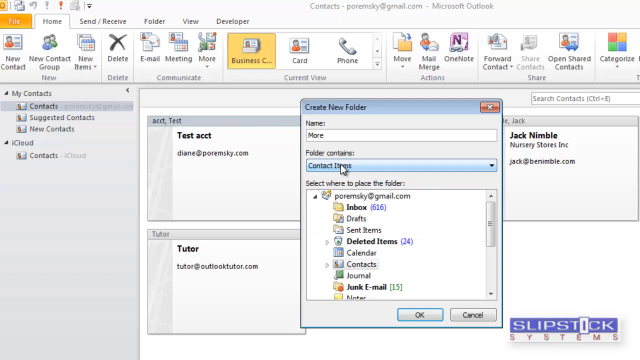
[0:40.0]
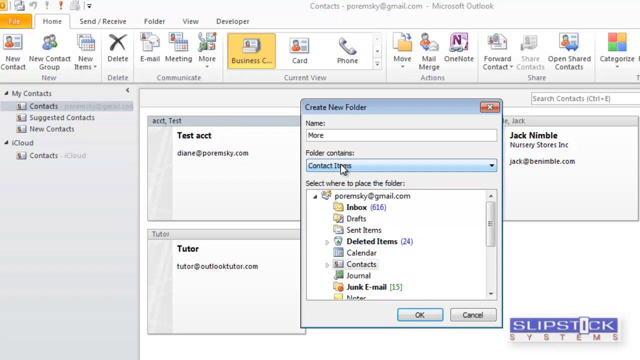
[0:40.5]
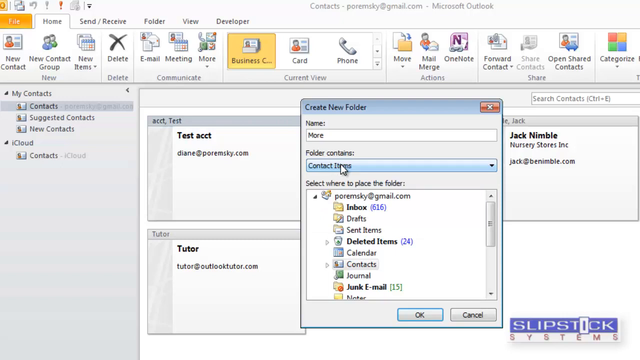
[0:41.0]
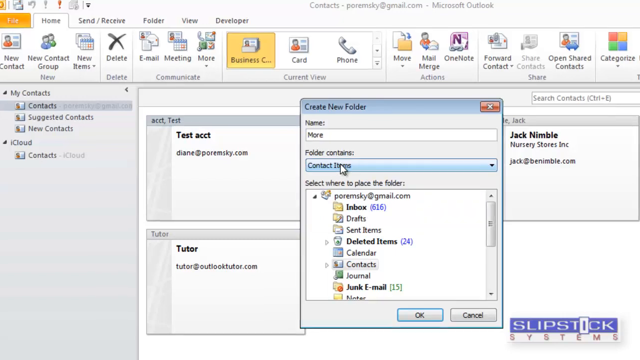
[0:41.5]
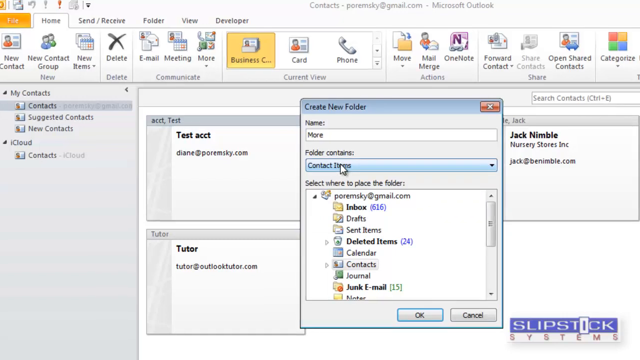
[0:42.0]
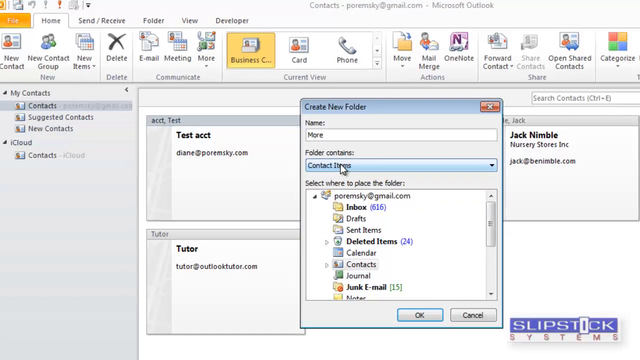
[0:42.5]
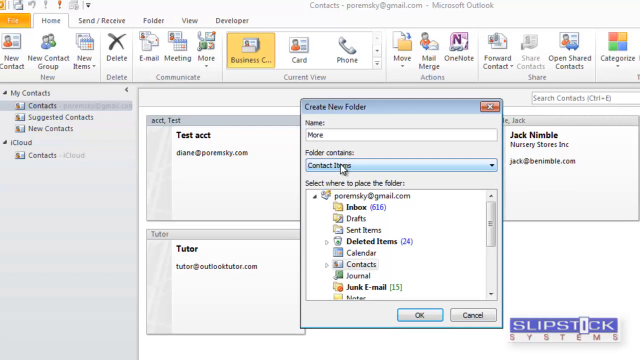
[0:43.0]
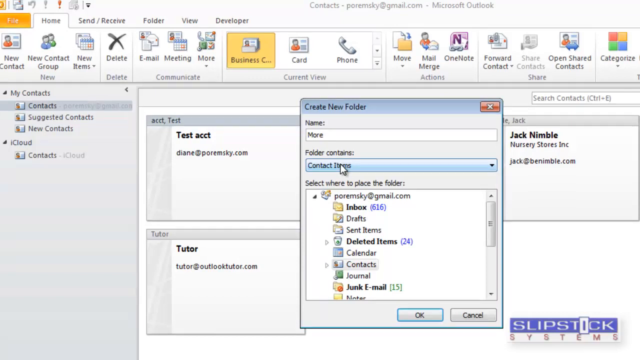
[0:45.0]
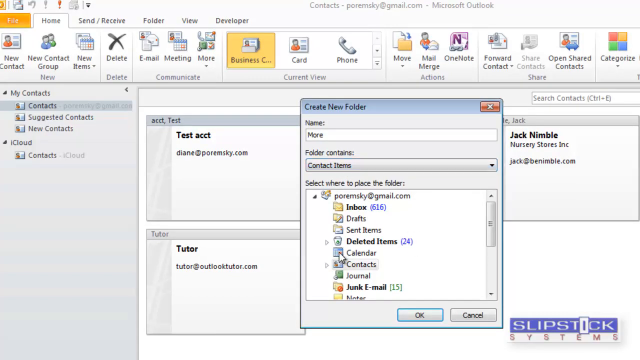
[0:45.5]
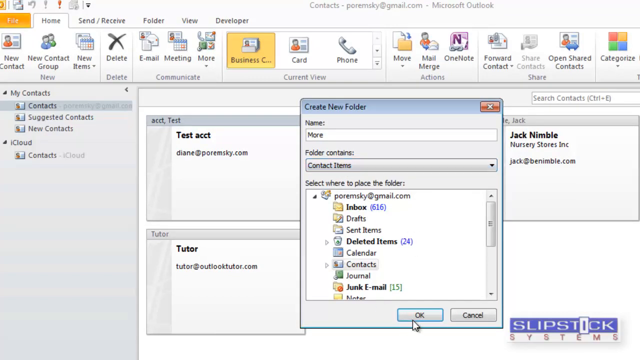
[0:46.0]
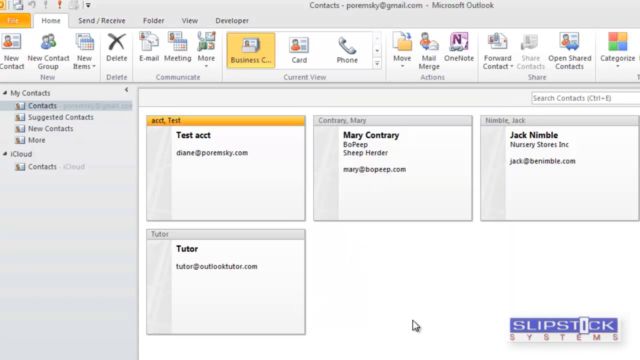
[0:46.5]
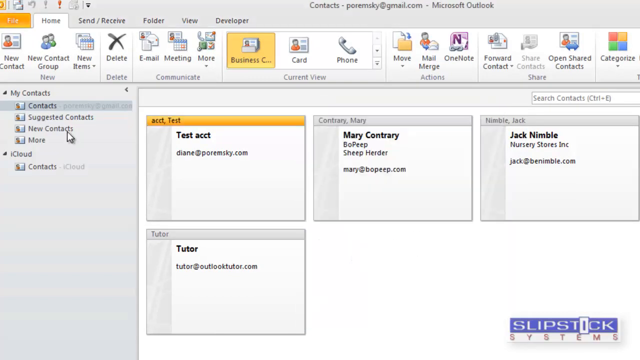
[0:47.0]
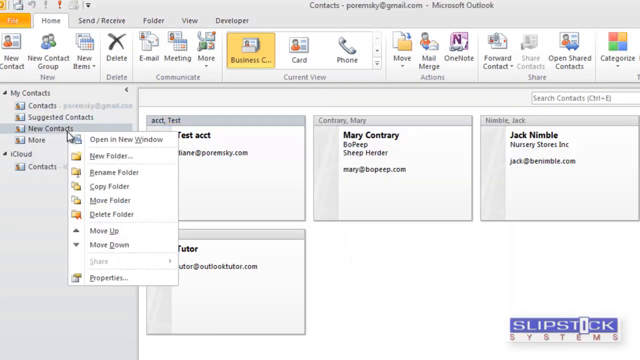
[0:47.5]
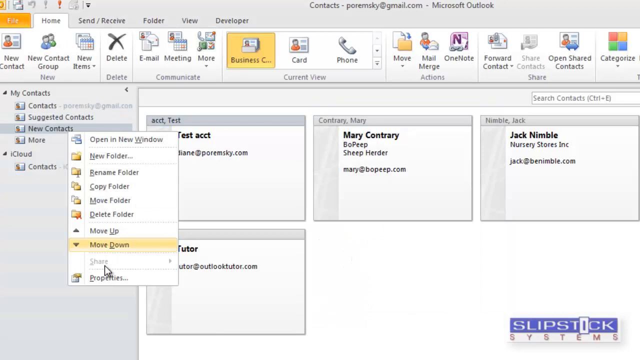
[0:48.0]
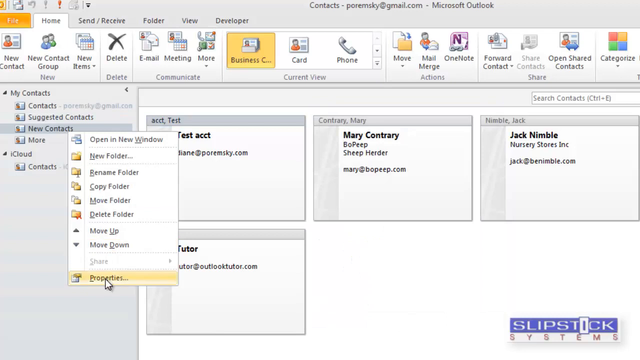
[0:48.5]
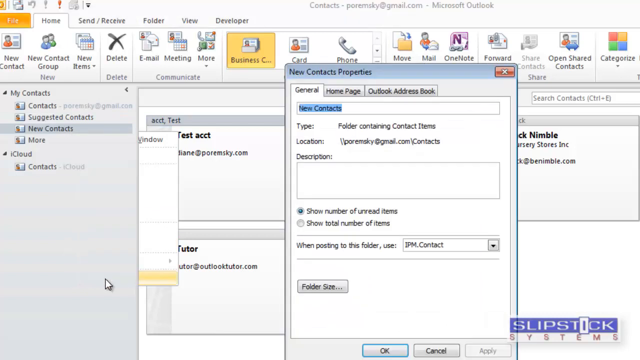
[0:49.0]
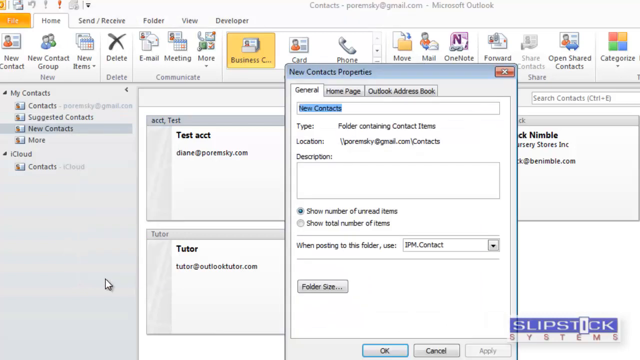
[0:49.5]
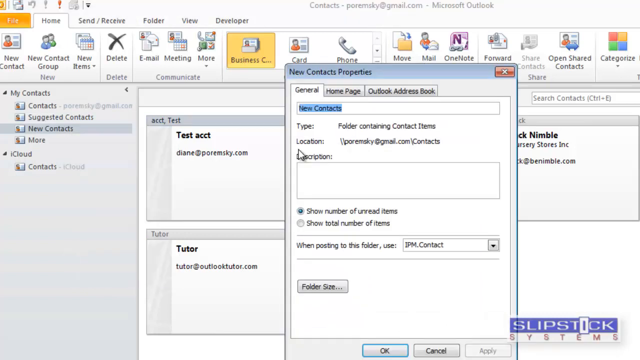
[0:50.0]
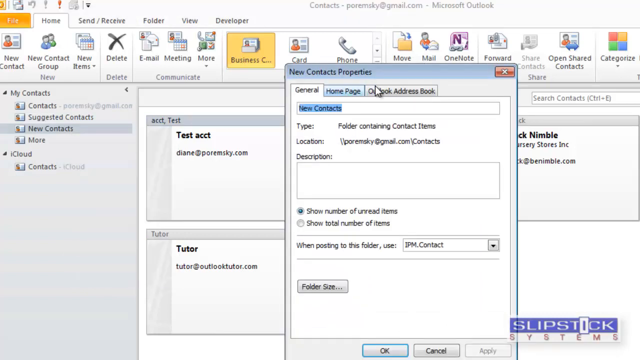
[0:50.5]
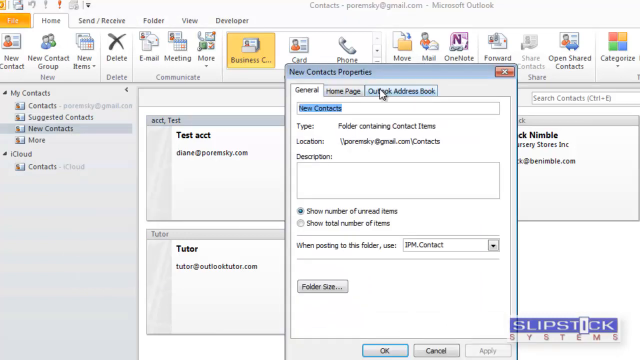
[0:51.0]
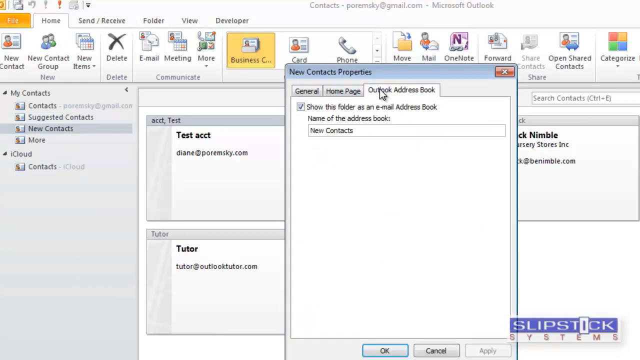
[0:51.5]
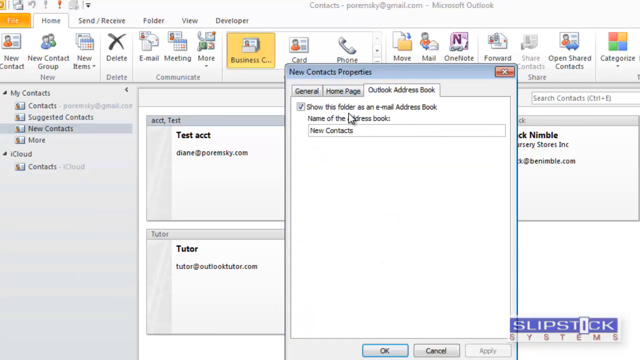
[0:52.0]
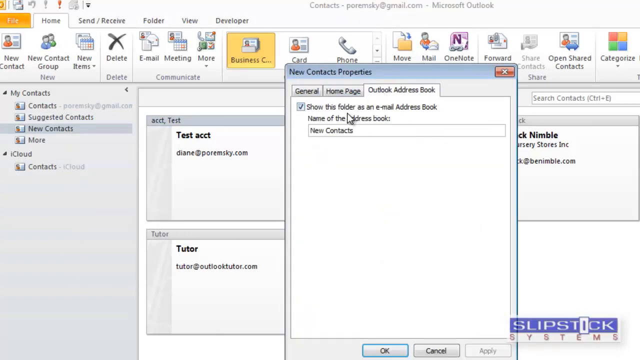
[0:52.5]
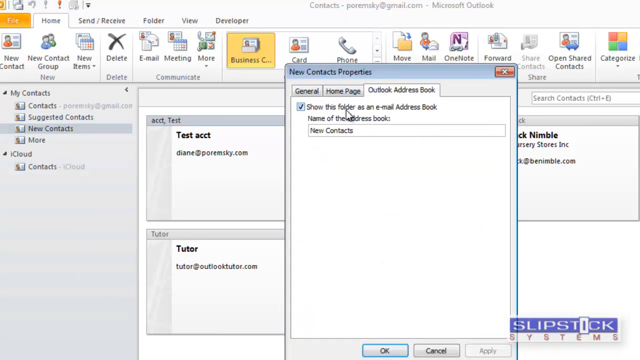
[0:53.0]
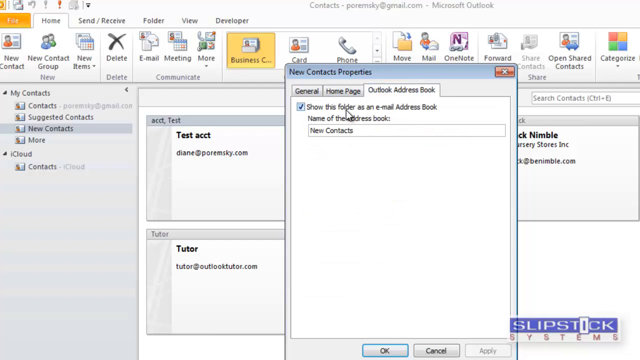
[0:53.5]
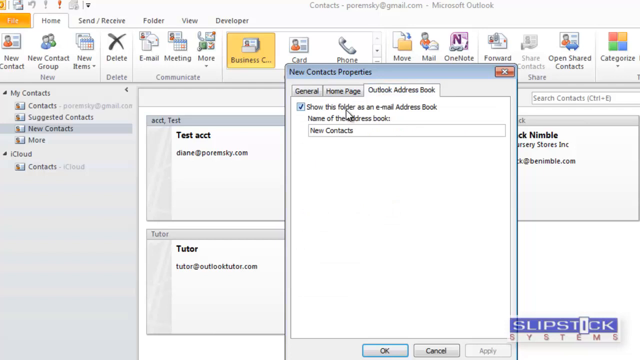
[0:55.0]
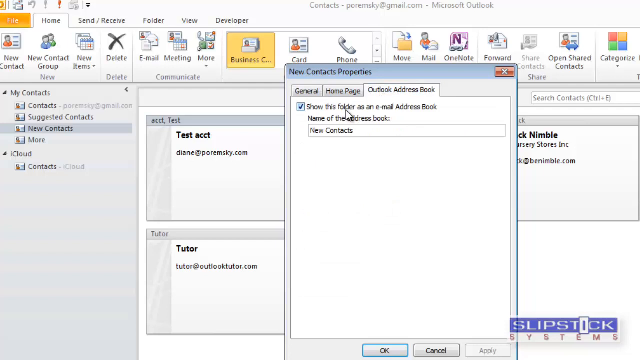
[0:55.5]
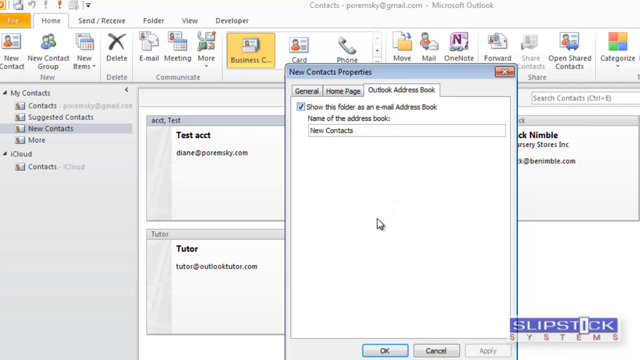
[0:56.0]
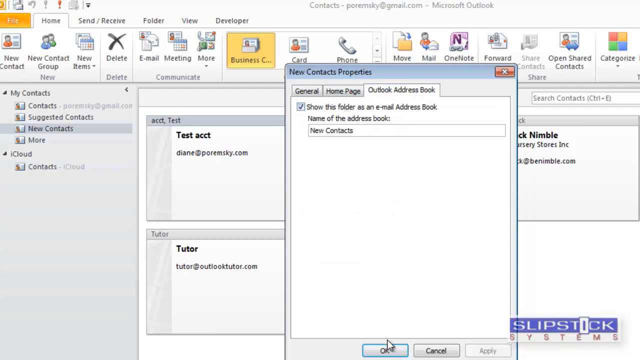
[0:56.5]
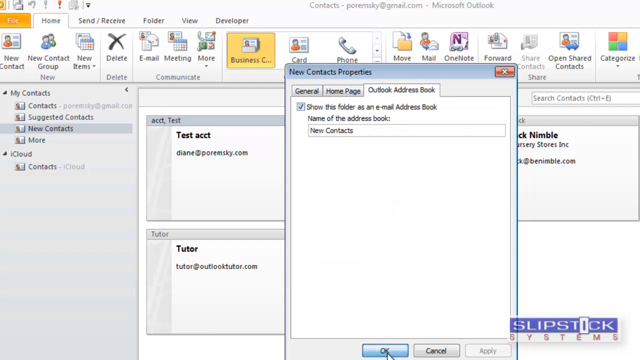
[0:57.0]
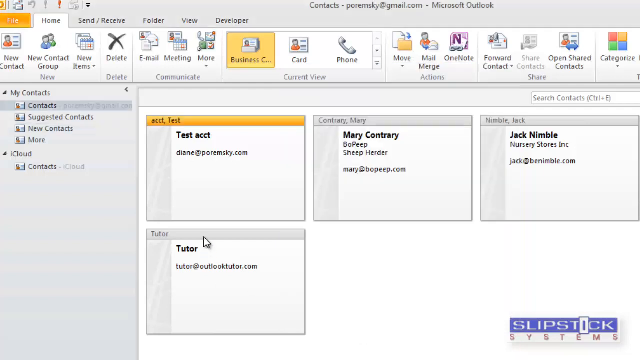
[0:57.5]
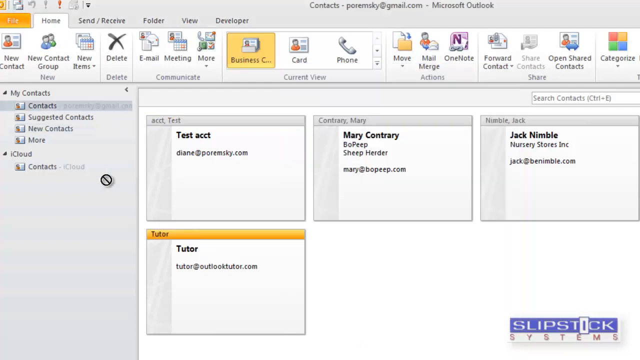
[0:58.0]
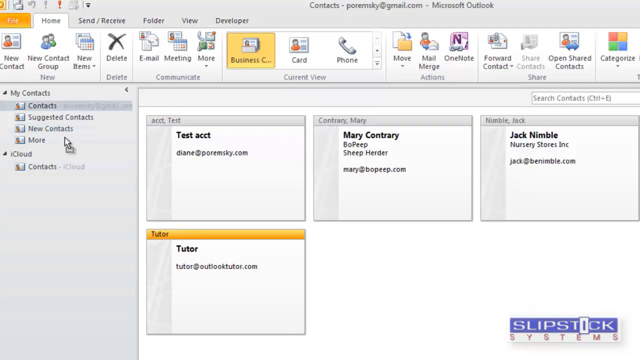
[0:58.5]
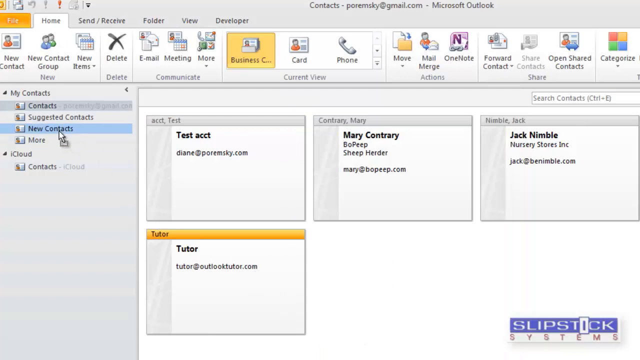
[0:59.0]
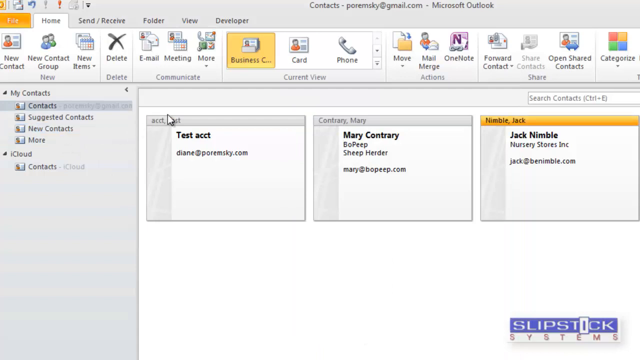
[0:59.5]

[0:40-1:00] Under my contact, there is a section that says "contact." Properties is selected, opening a new contact properties dialog box. In the general tab there are options to give a description. Under new contact in the general tab is a section that says "type," and next to it is "folder containing contact items," followed by location, URL and email address. It shows the total number of items and has a drop-down box. Under that is a button, and "folder size" appears. The address book is then opened, followed by the Outlook address book.